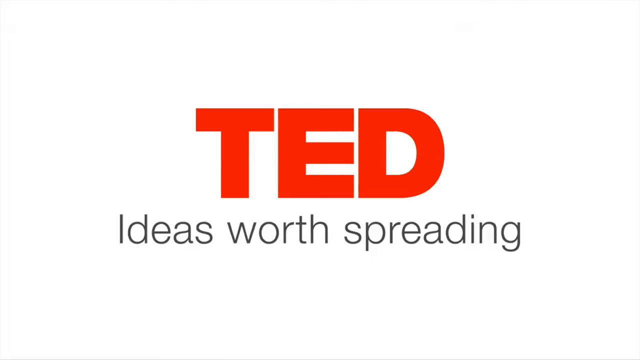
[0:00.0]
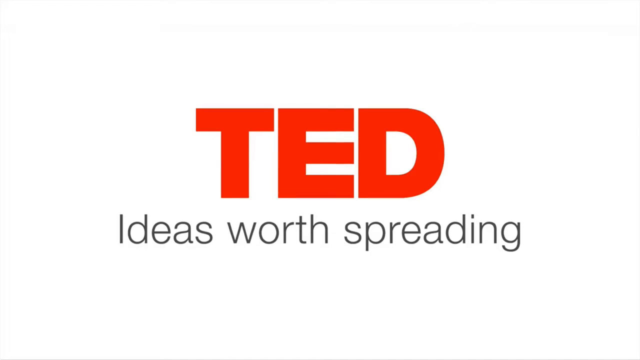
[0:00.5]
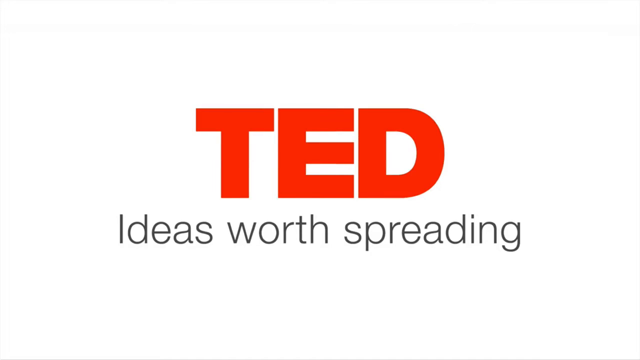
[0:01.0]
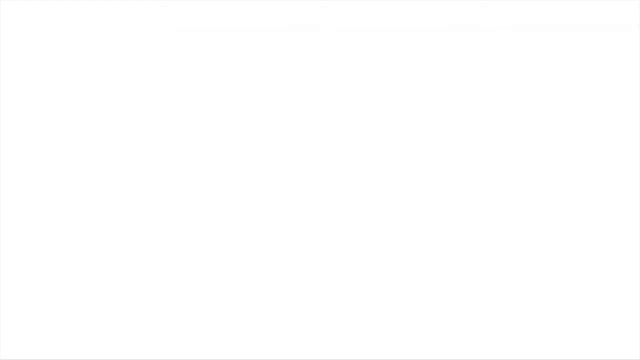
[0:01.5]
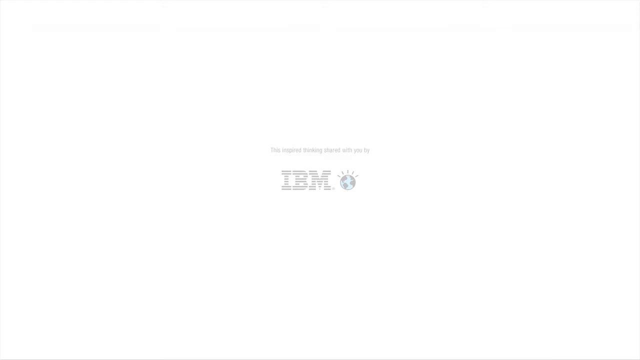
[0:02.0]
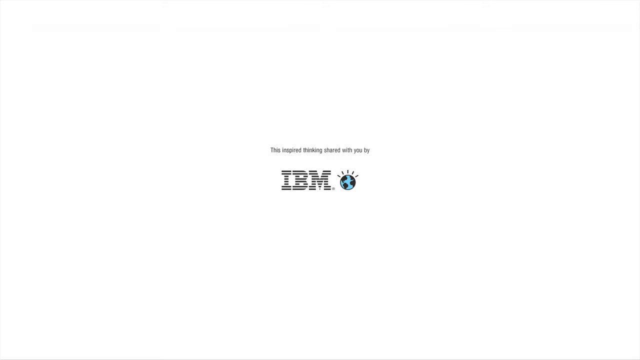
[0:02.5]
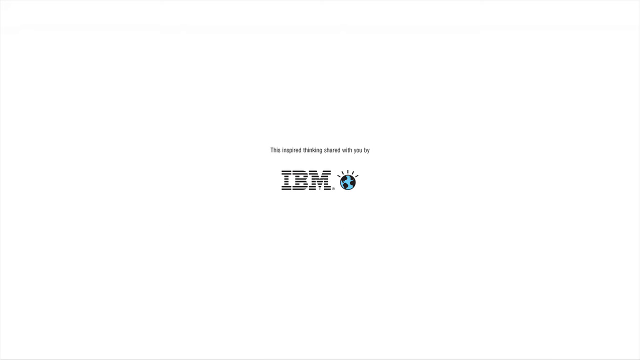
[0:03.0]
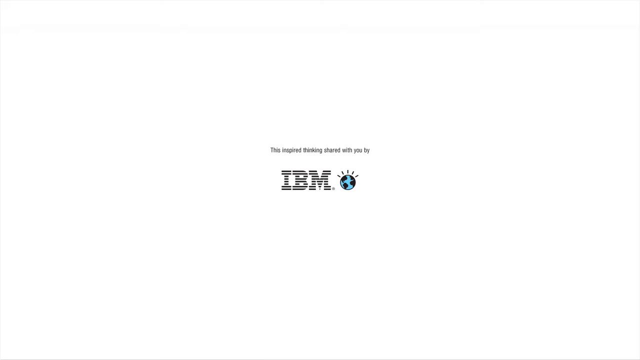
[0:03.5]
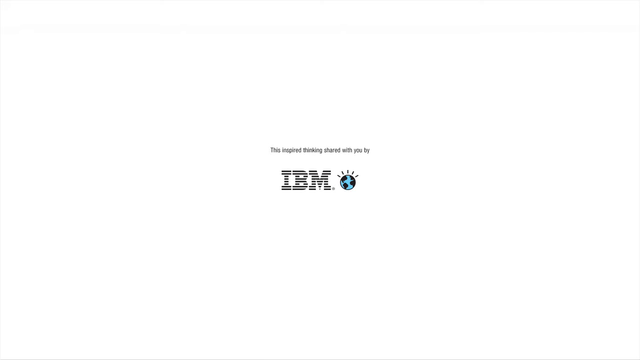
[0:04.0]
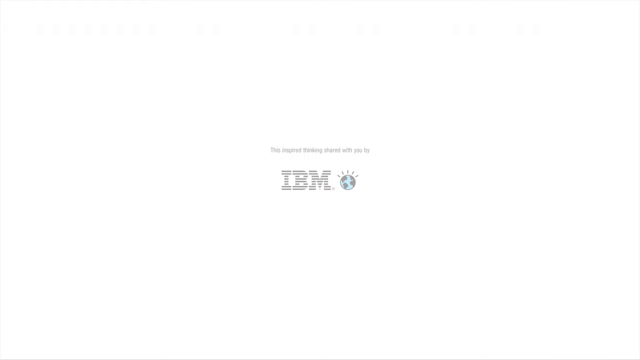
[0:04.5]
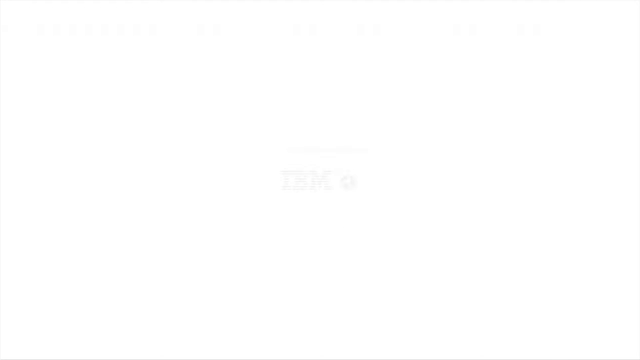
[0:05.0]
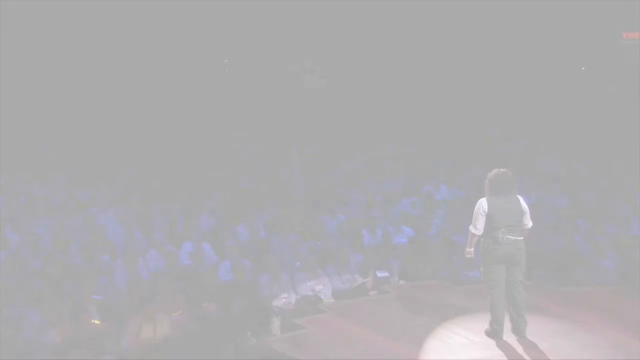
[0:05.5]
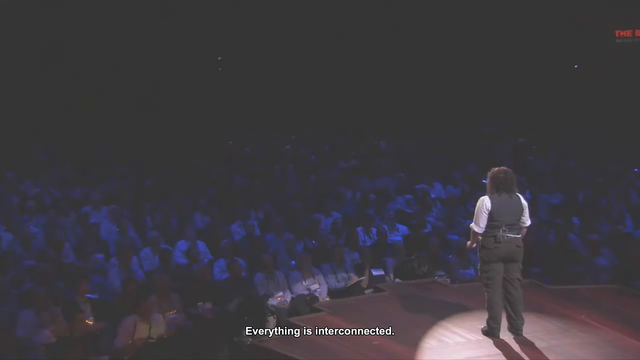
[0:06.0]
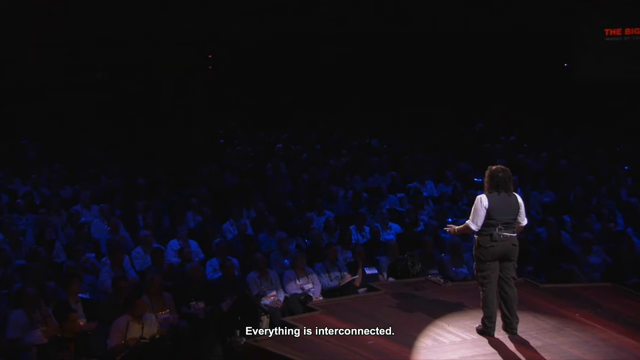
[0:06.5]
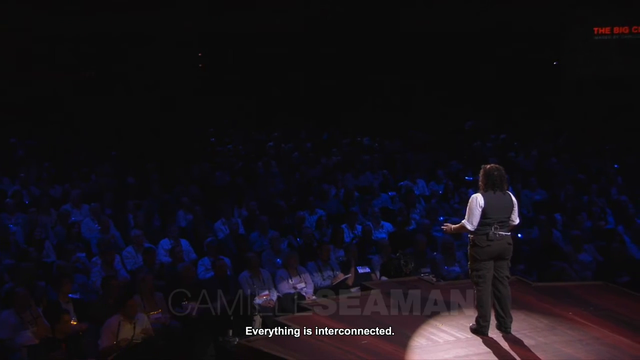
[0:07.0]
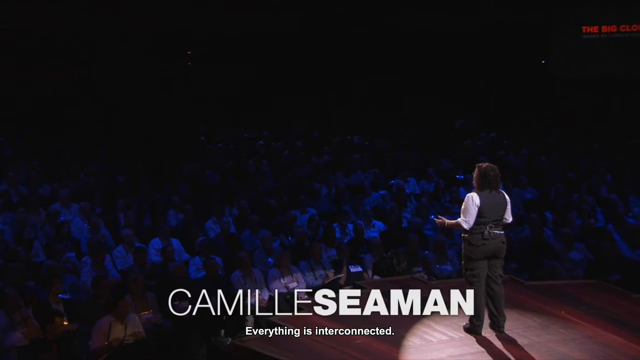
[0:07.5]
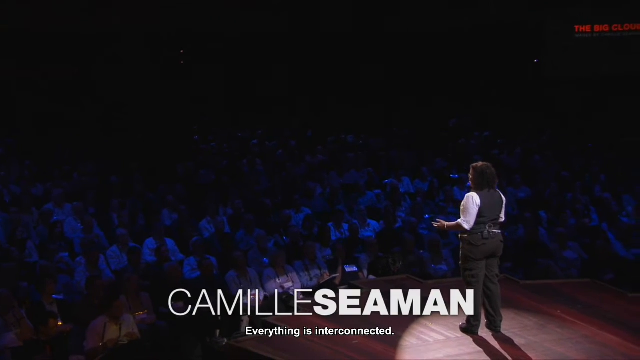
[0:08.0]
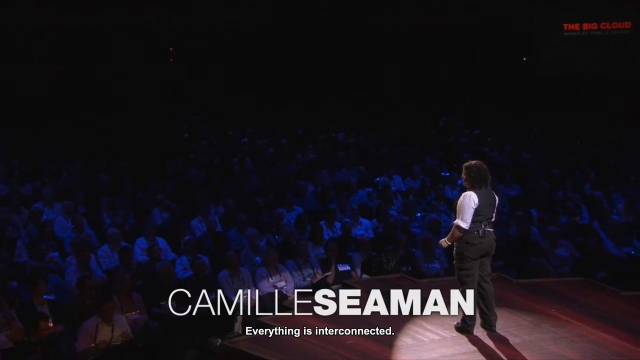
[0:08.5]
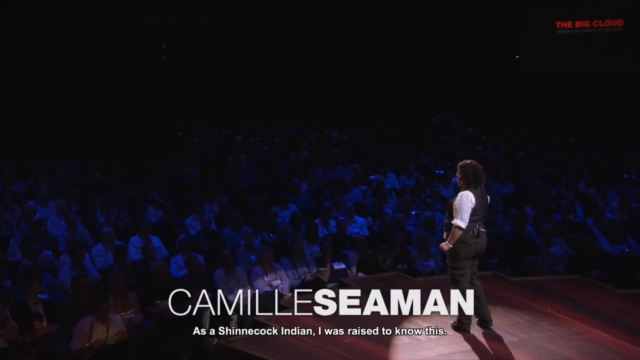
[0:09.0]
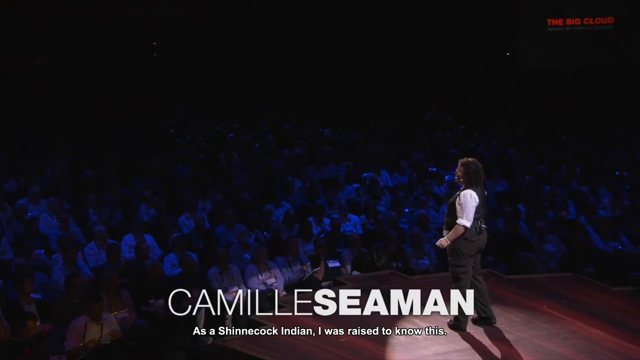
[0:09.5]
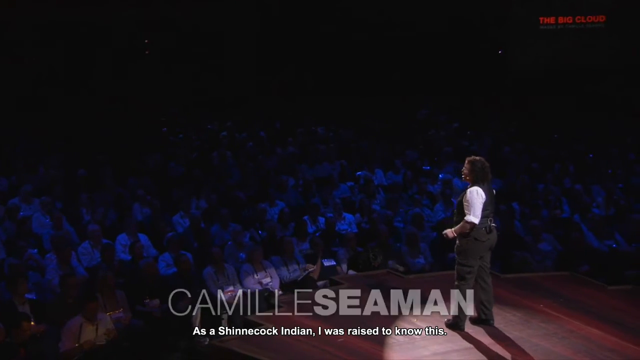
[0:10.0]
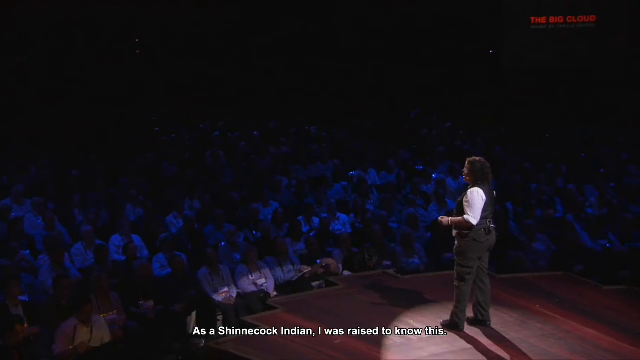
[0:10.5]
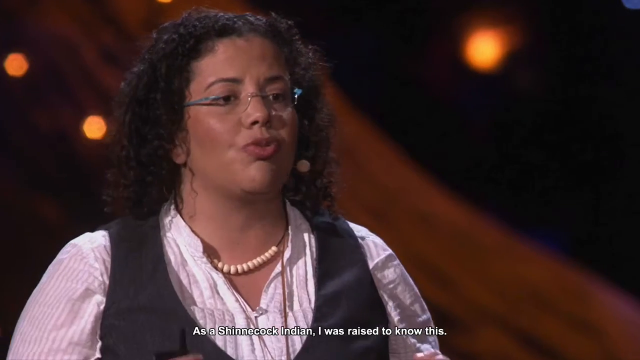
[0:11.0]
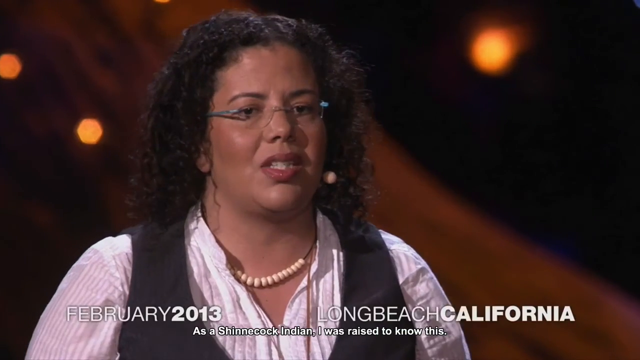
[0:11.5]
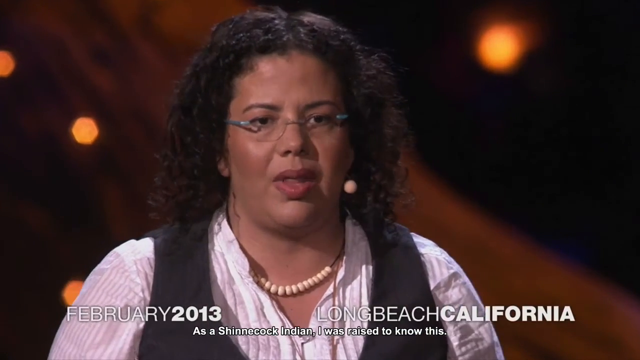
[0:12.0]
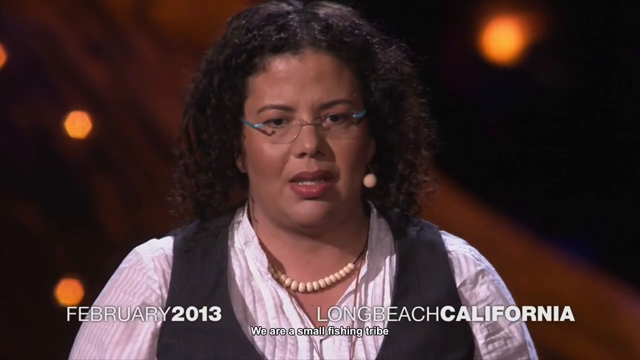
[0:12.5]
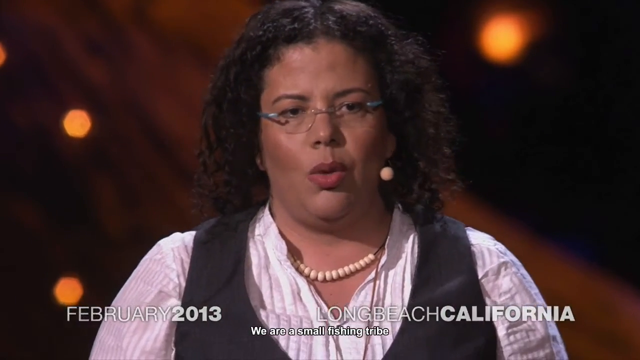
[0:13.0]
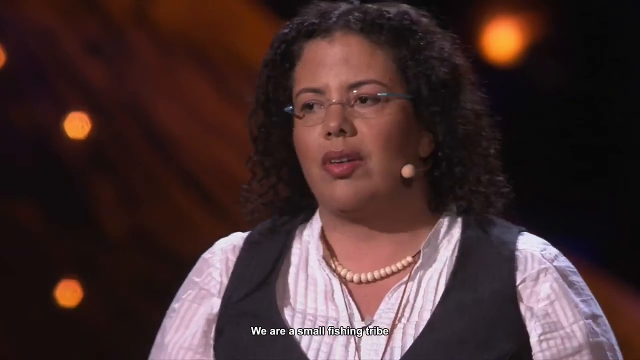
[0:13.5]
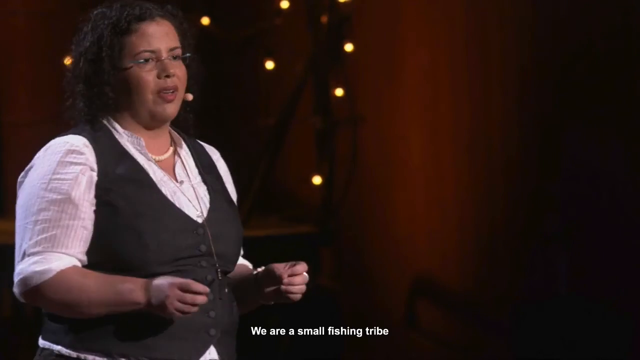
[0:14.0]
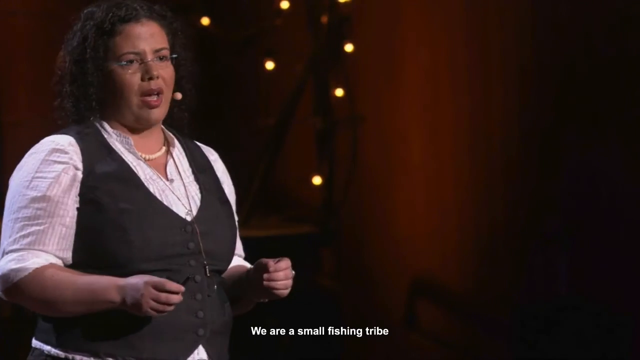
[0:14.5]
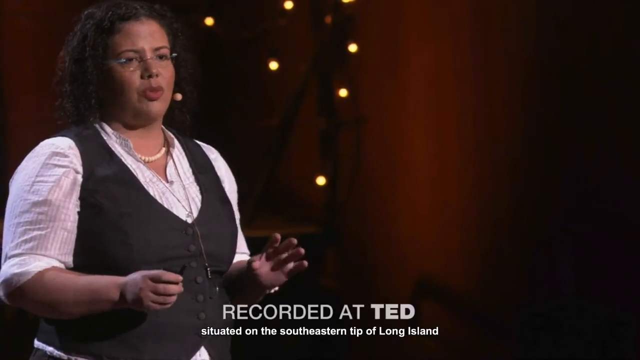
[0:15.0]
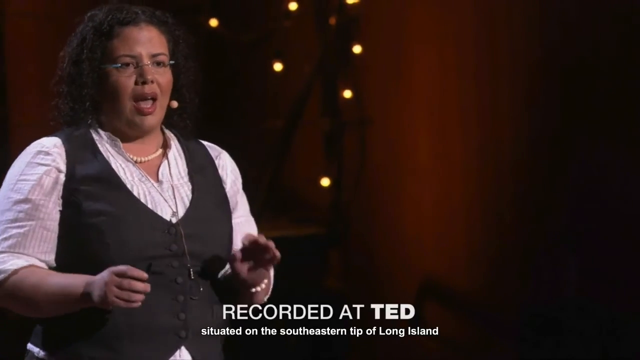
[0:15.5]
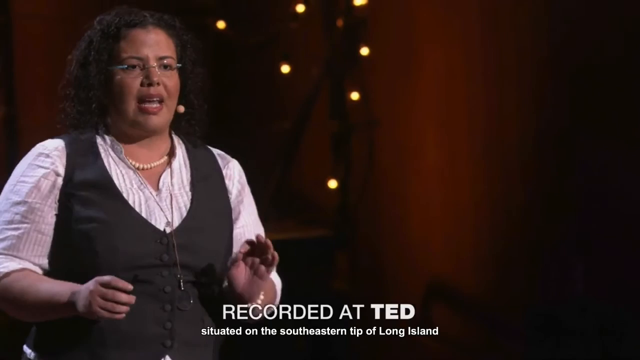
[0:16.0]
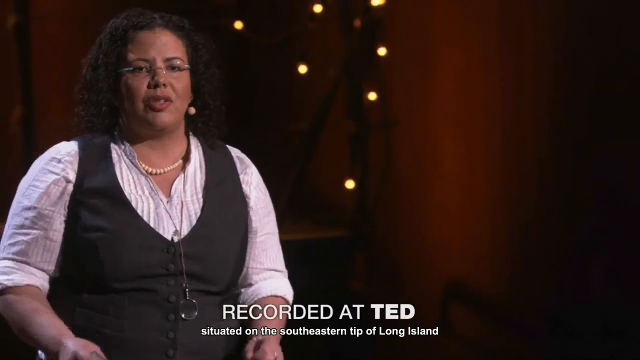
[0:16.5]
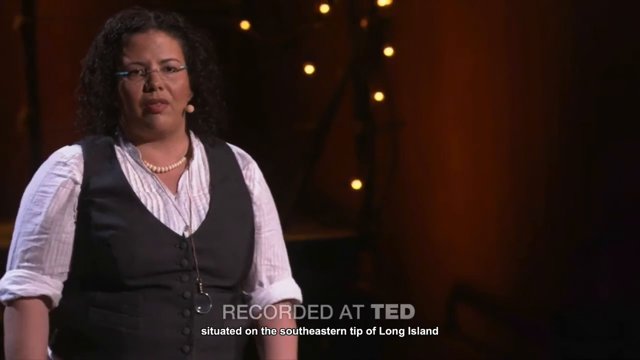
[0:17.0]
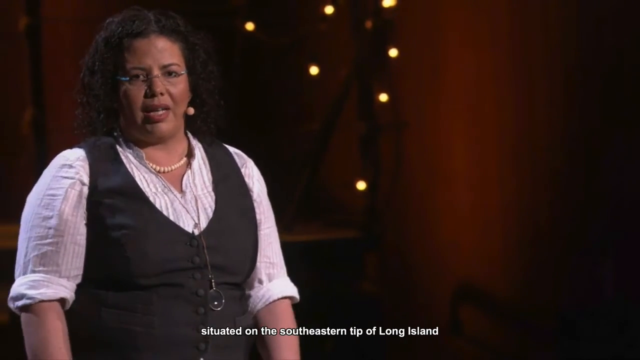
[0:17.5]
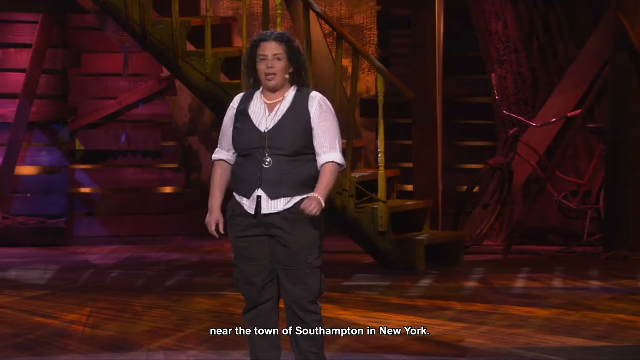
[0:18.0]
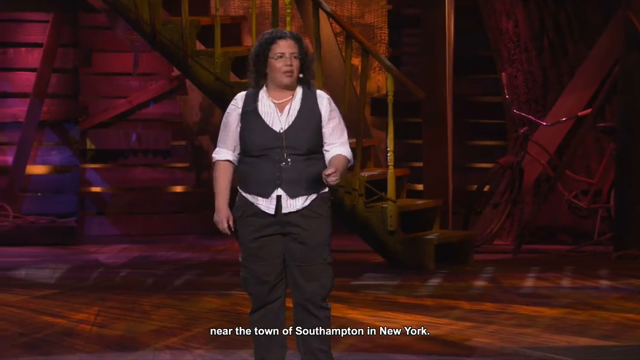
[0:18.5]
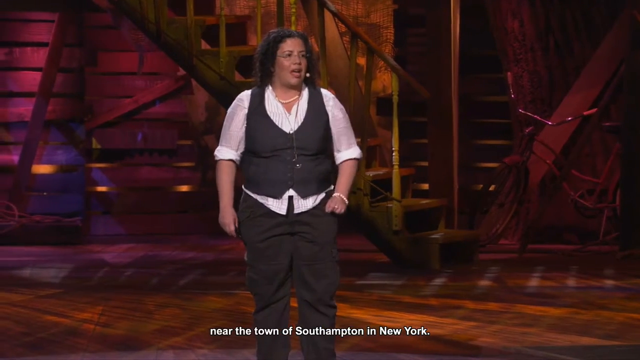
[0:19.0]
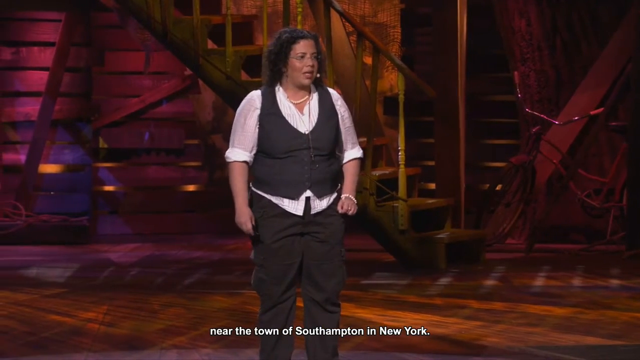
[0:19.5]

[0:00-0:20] The video opens with a title screen that seems to be for a TED video, with the subtitle "Ideas Worth Spreading." The TED logo is in its classic red, the subtitle is black, and the background of the title screen is white. The logo disappears to leave an all-white screen, and then the IBM logo appears with text above it reading "This inspired thinking shared with you by IBM." That fades out, and the TED talk begins. There is a very large audience in almost total darkness. The speaker is a woman, first seen in a shot from behind. She wears a sort of dark black vest over a white shirt, black pants, and maybe black shoes. She has medium-length, curly, light brown hair and seems to be white. The camera zooms in on her face, showing that she wears glasses and some sort of necklace. She speaks to the audience as the camera changes to different angles.